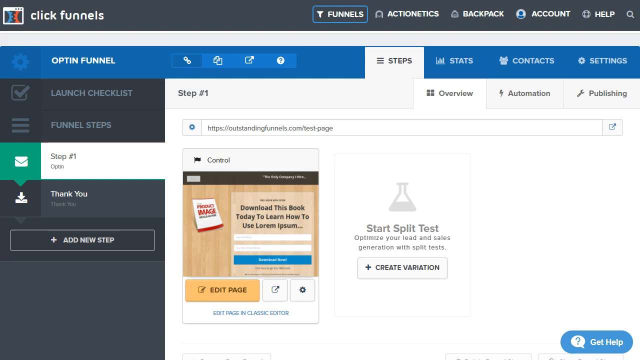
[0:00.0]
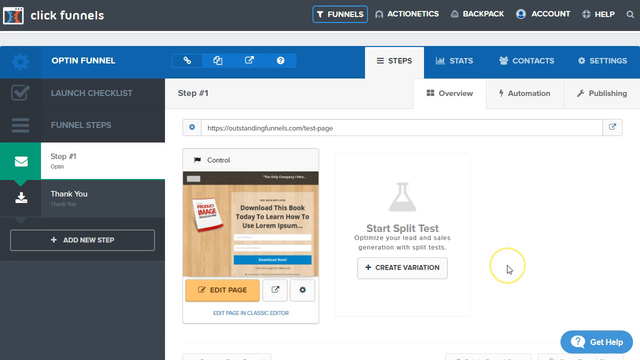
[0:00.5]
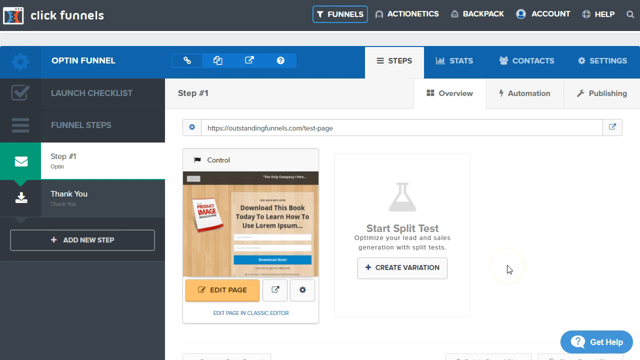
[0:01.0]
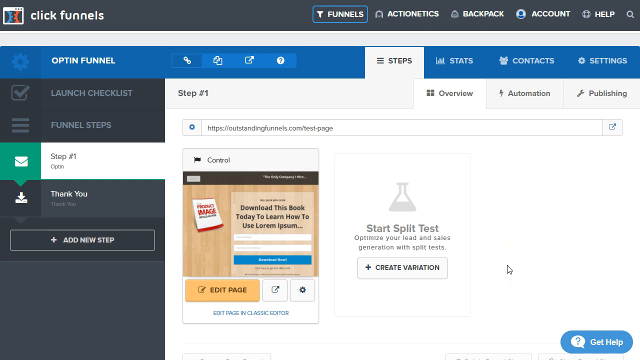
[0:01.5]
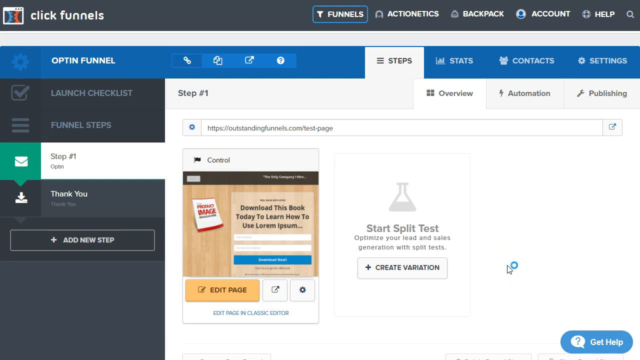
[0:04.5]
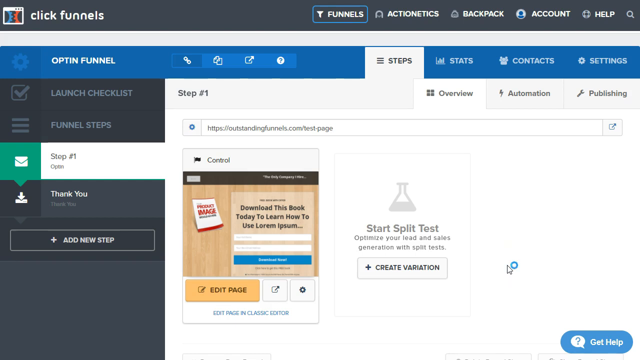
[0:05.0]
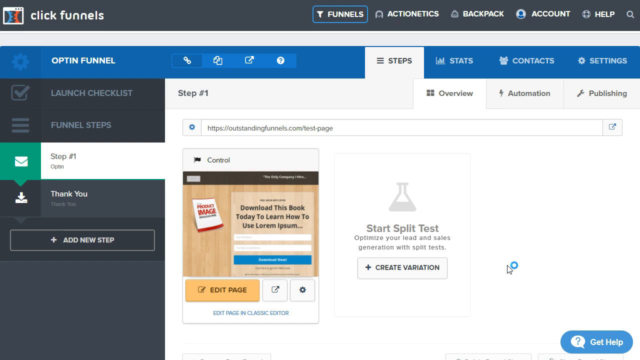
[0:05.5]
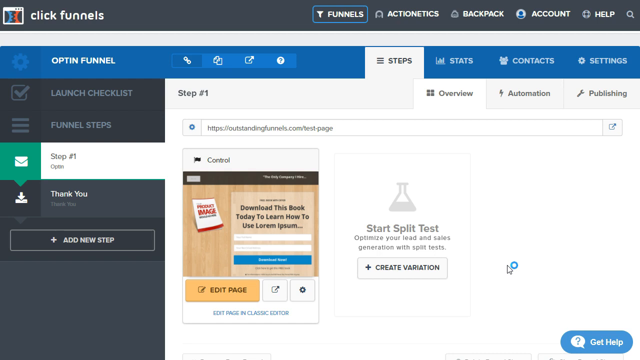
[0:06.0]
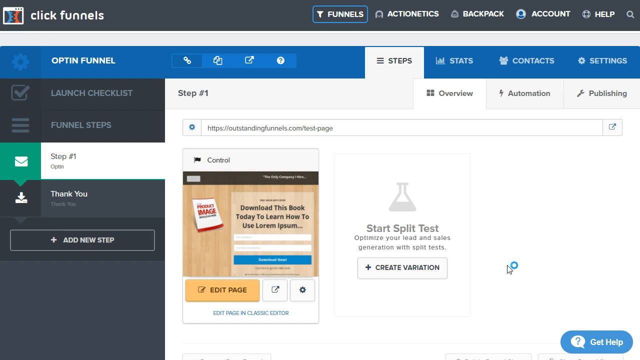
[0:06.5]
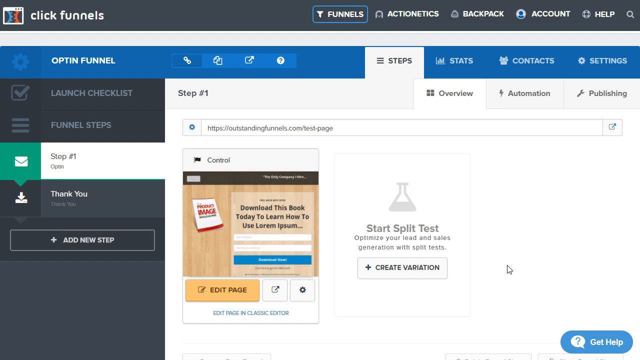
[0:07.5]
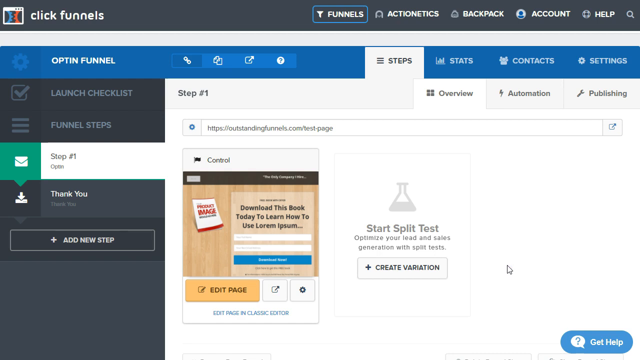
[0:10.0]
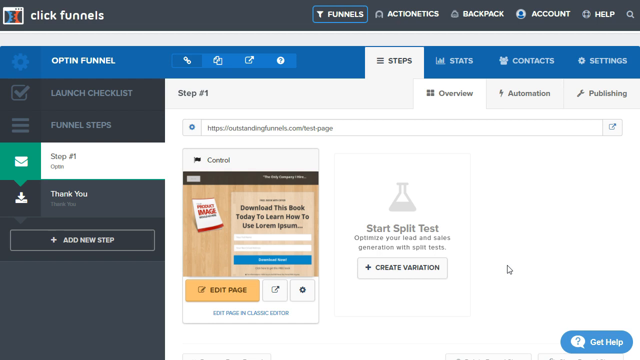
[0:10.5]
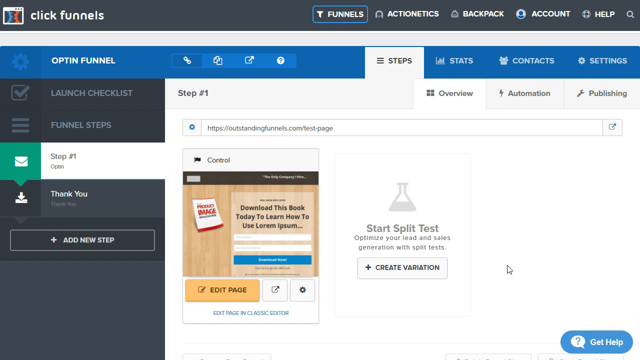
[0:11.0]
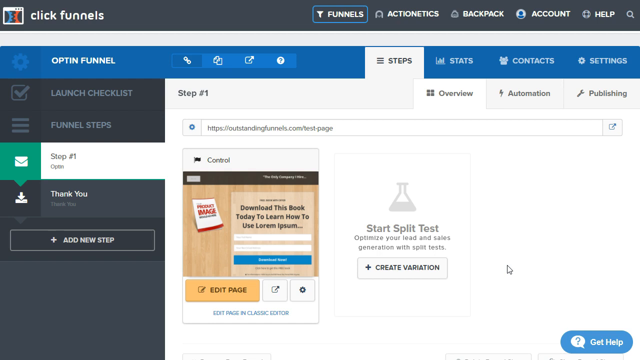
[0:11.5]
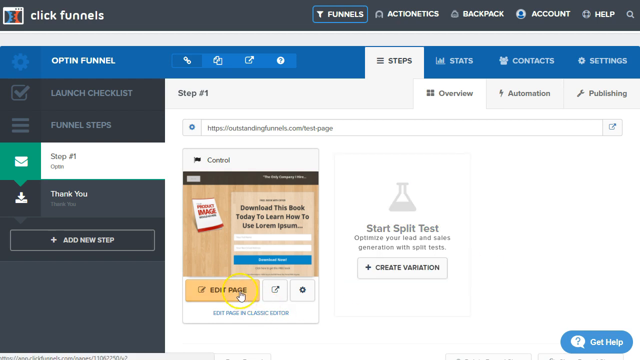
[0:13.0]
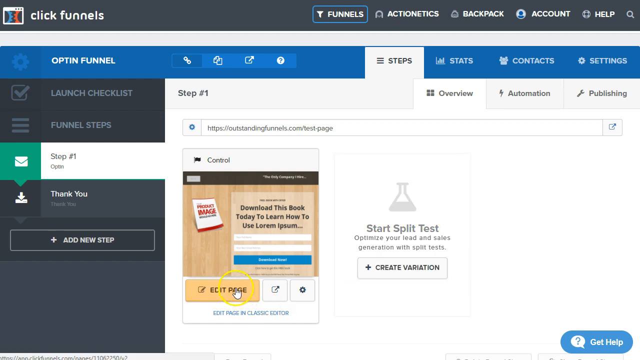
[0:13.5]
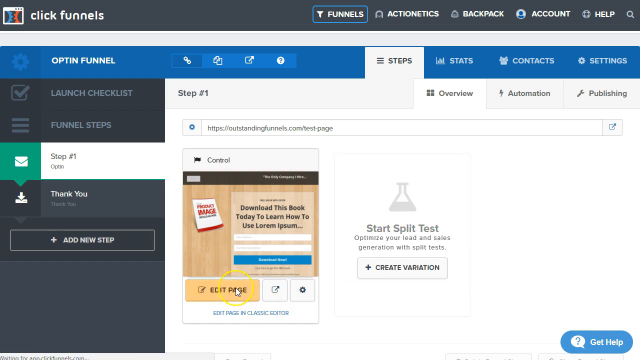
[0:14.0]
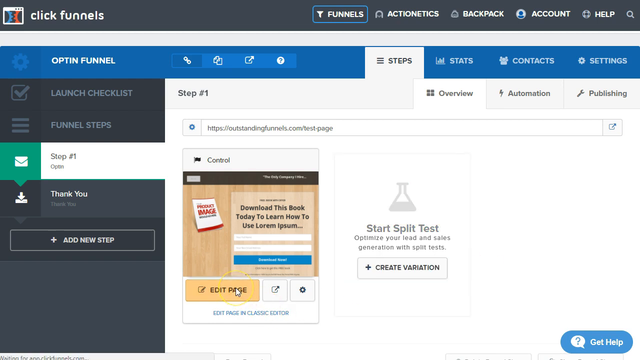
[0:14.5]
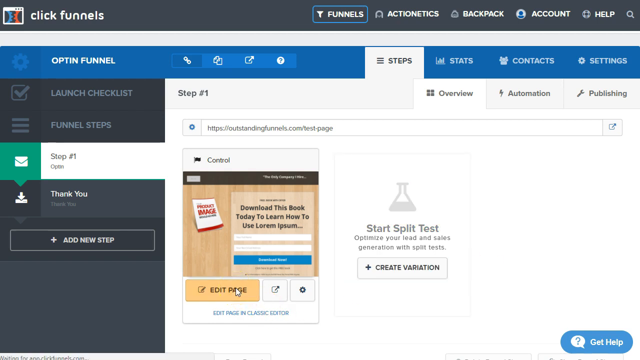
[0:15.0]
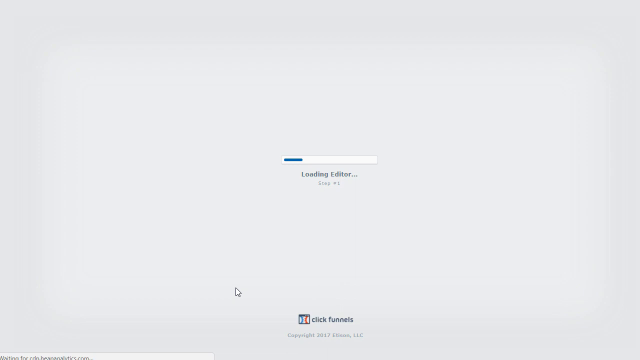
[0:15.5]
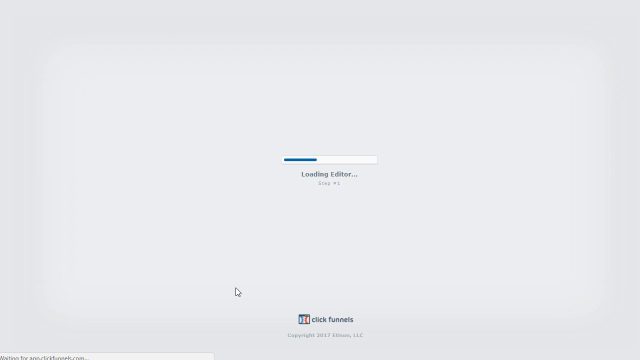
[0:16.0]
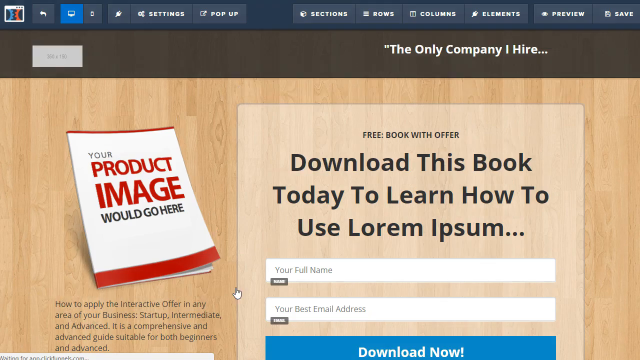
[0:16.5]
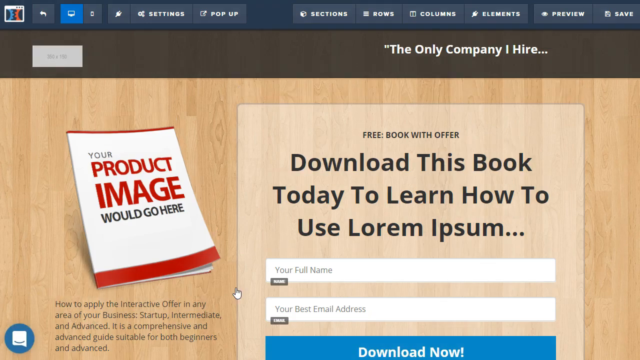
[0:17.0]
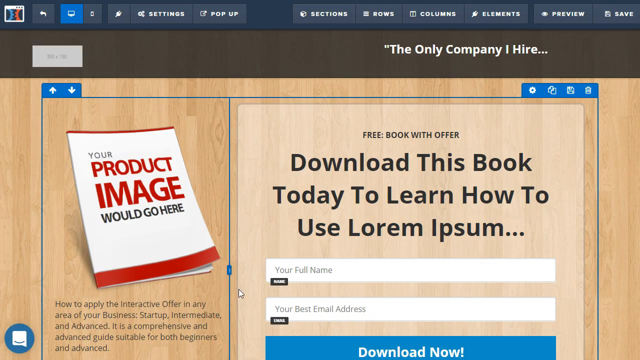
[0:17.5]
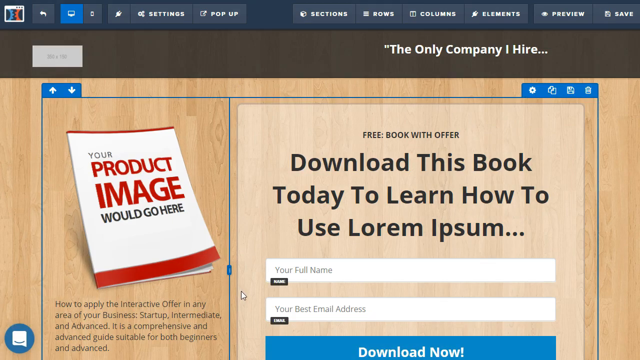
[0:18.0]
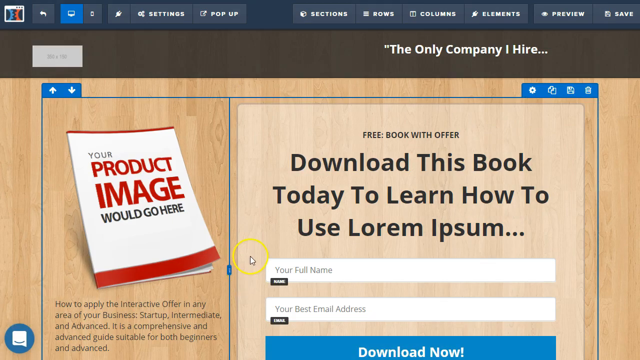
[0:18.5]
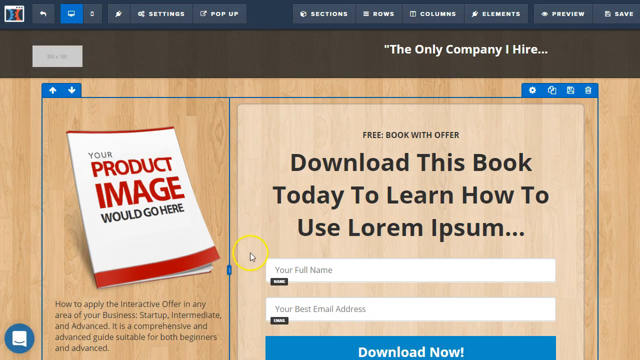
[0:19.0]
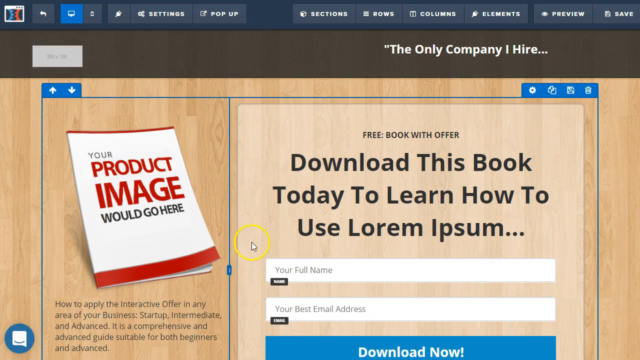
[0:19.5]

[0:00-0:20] A page is open on someone's computer screen, and it says "open click funnels" and "opt-in funnel". A tab is open that says "steps", and there is text reading "start split test". As things move, the cursor has a yellow circle around it, and then it kind of comes up as a blue dot. A little box comes up that says "loading now", followed by "your product image would go here" and "download this book today to learn how to use lorem ipsum". A red arrow points upward to where the image would go, up in the tabs at the top area of the screen. Up there is also a quote that says "the only company I hire".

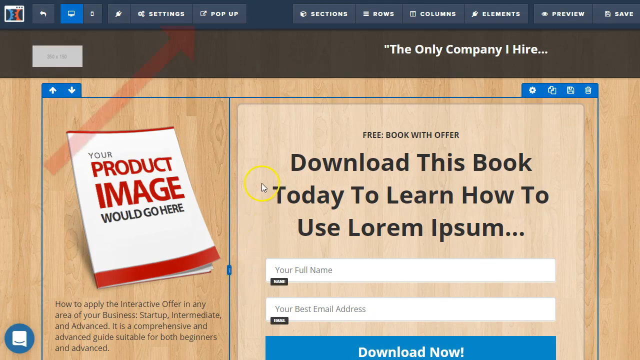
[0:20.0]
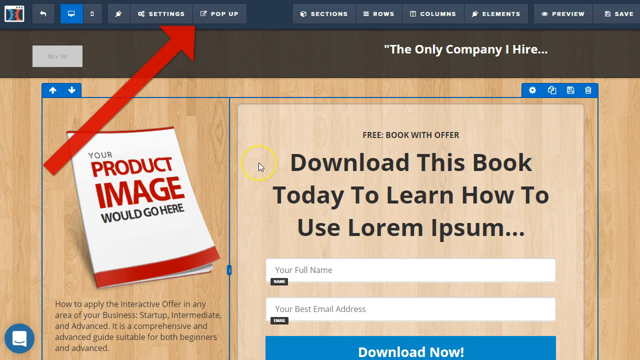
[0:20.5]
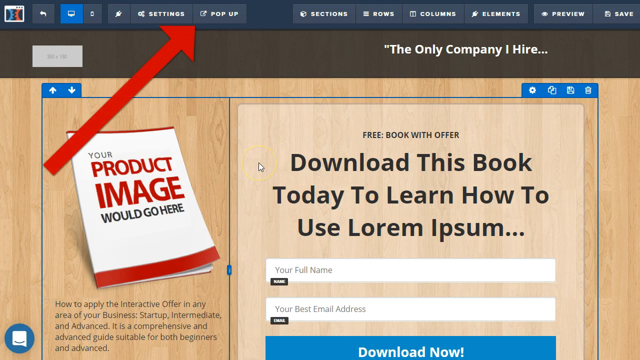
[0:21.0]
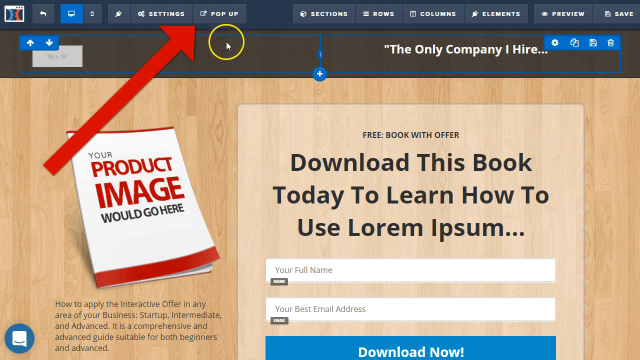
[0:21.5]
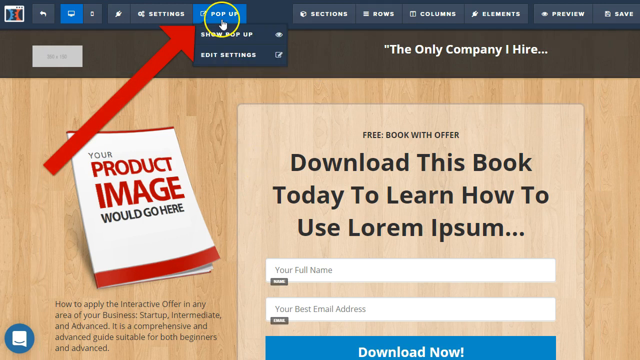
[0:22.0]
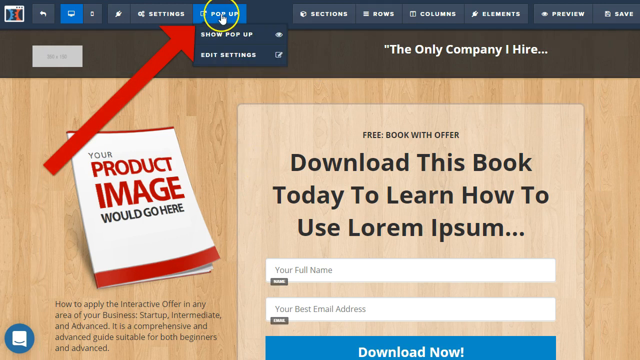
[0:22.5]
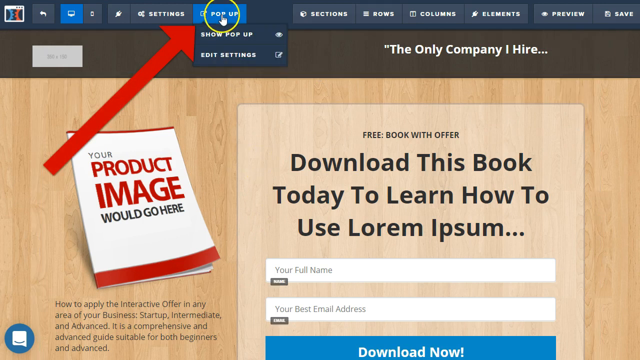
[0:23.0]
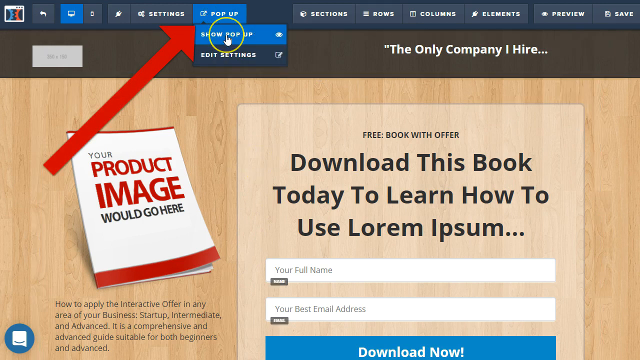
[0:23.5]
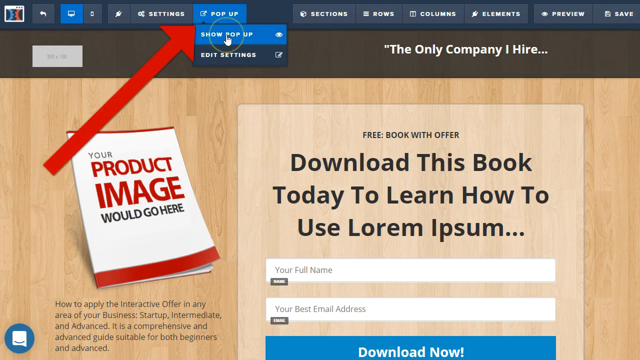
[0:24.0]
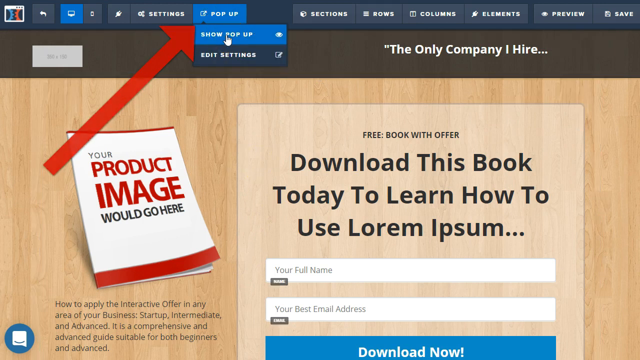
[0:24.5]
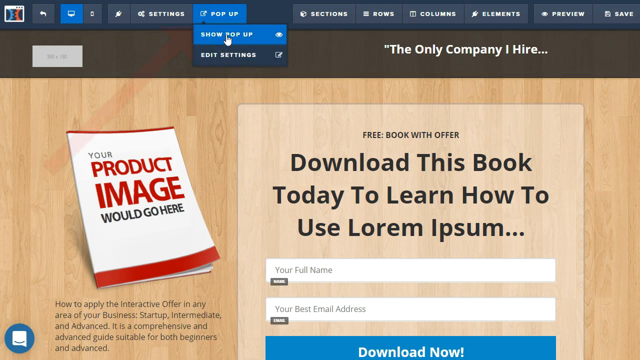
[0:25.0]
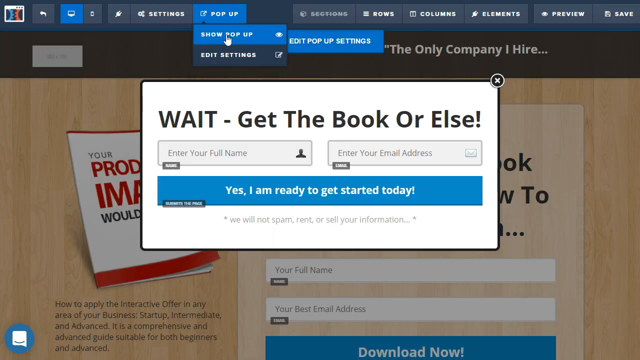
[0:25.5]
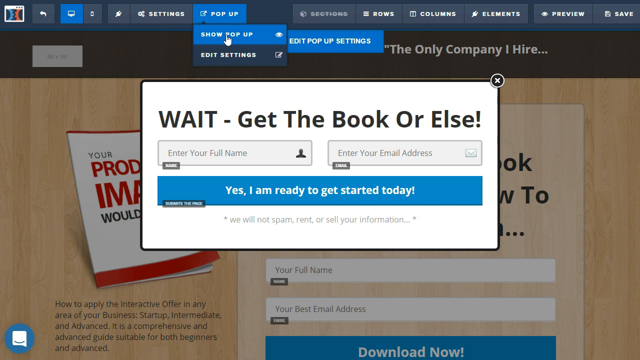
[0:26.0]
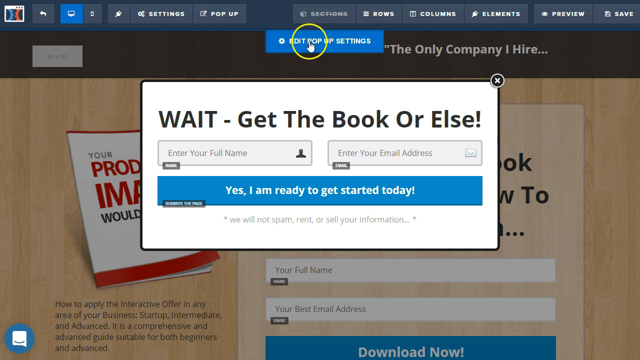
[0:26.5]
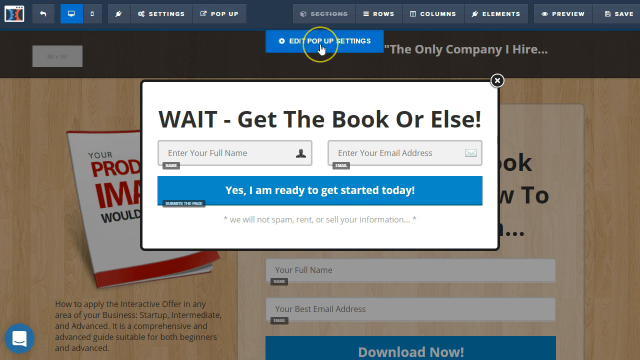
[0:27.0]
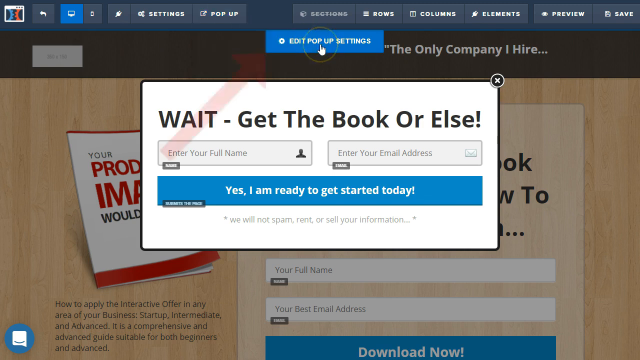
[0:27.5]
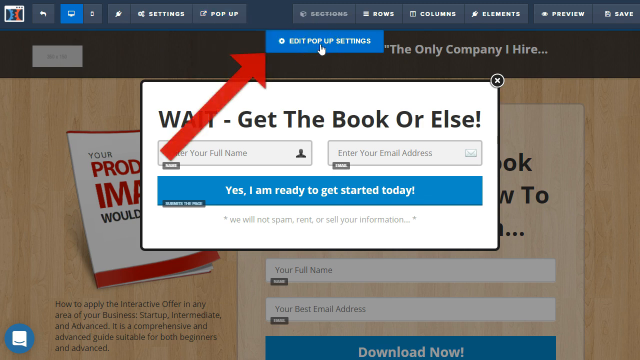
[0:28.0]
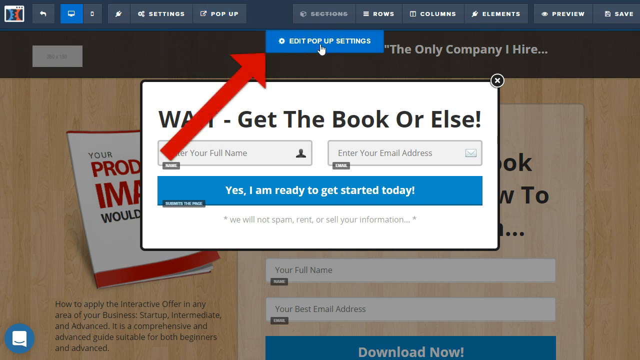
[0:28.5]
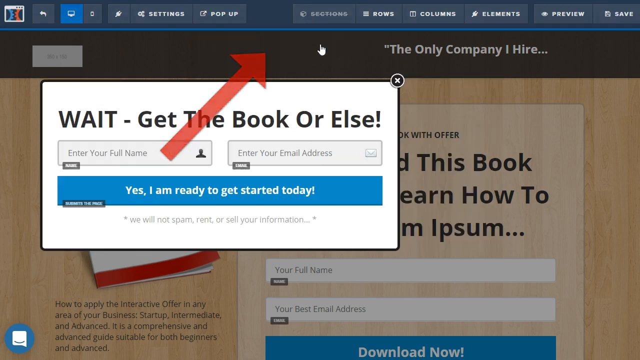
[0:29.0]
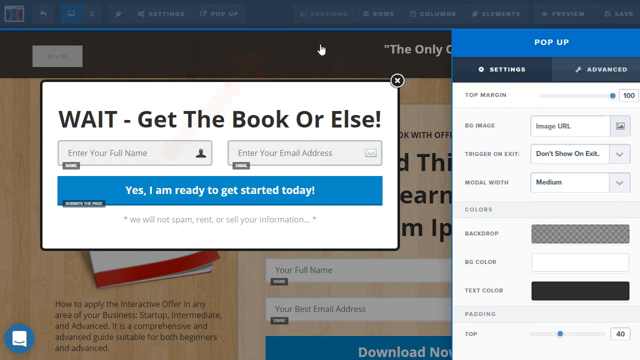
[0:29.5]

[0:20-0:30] A page is up on someone's screen, and the yellow cursor goes up to a new tab. A drop-down menu says "show pop up" and "edit pop up settings", with a red arrow pointing to it. A box for the pop-up then comes up and drops down, showing "pop up settings" and "advanced". It lists "BG image" with an image URL, then "trigger on exit" set to "don't show on exit", and "modal width" set to "medium".